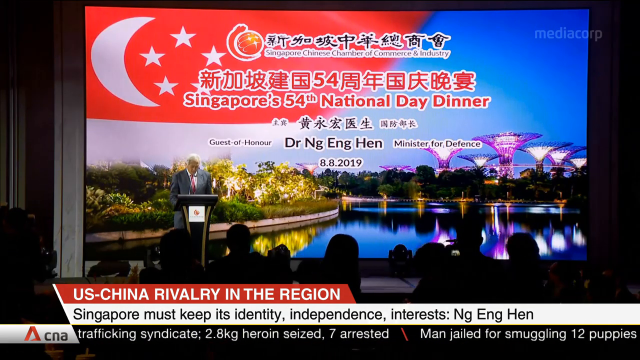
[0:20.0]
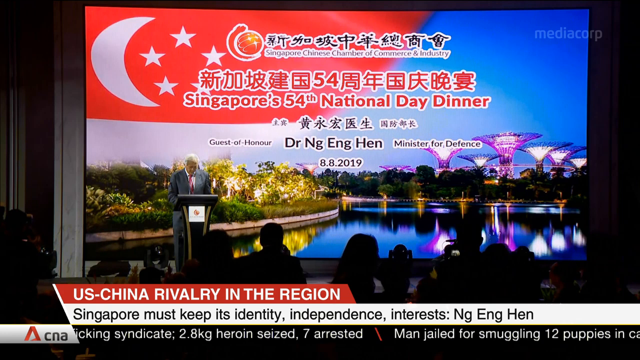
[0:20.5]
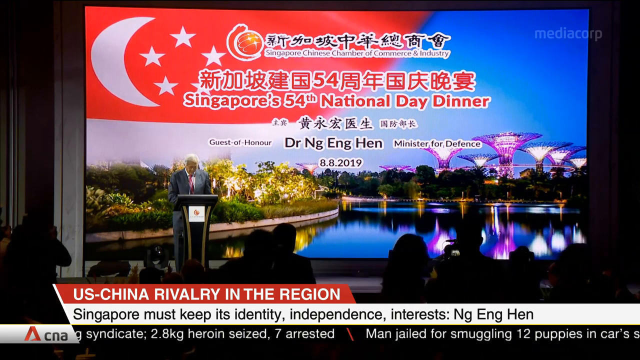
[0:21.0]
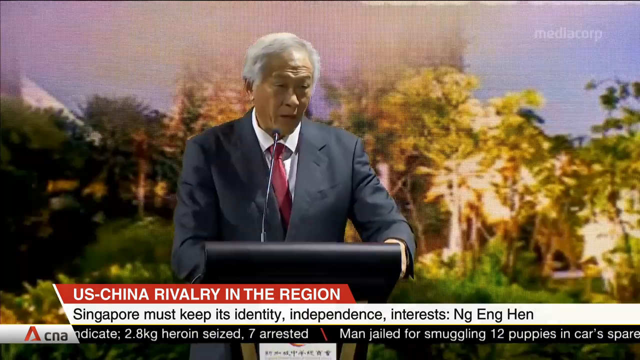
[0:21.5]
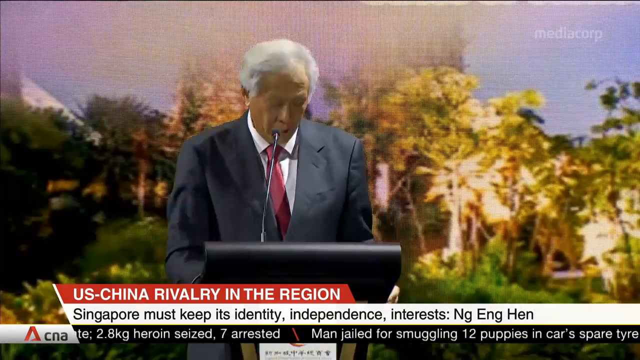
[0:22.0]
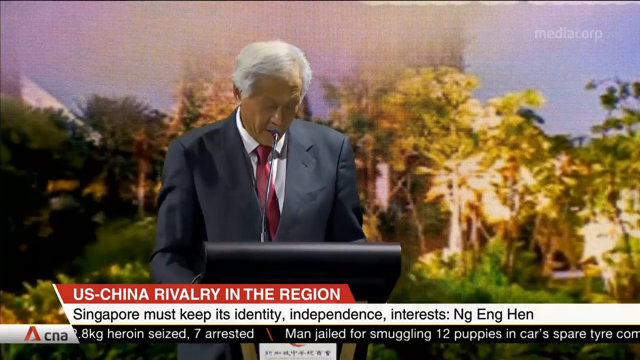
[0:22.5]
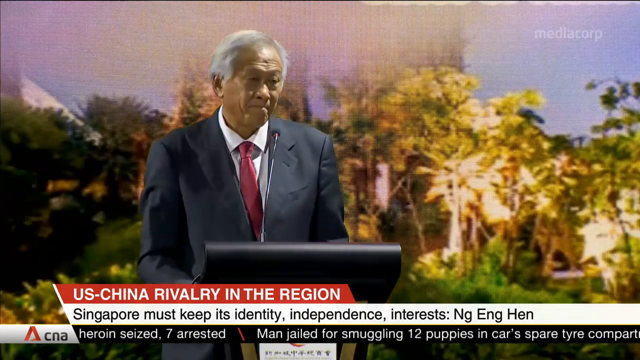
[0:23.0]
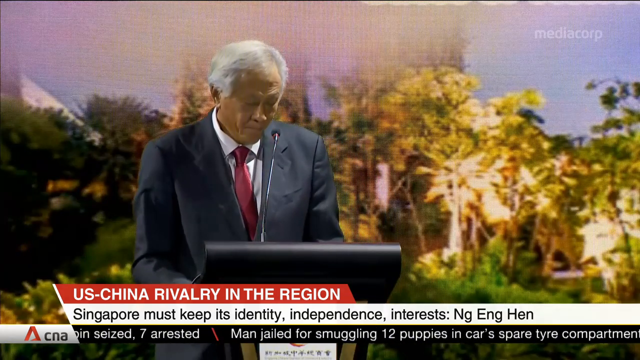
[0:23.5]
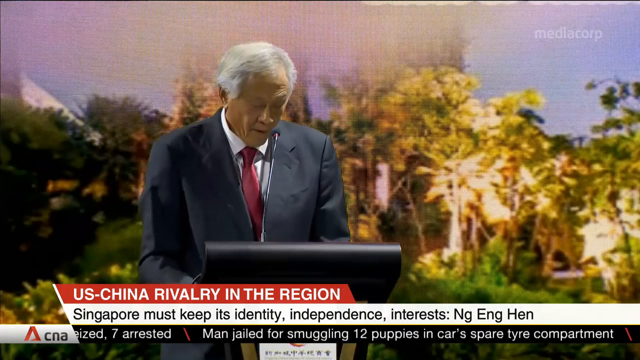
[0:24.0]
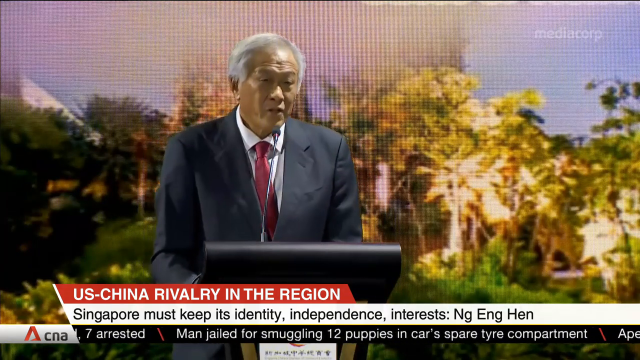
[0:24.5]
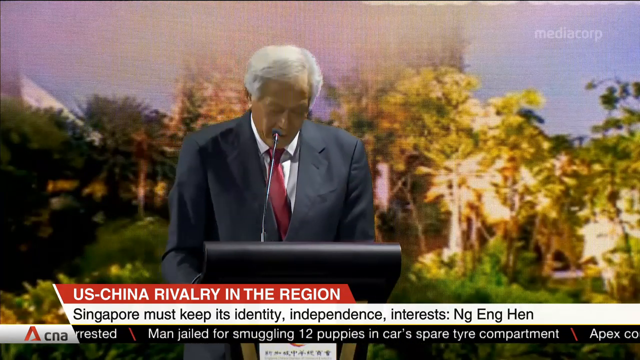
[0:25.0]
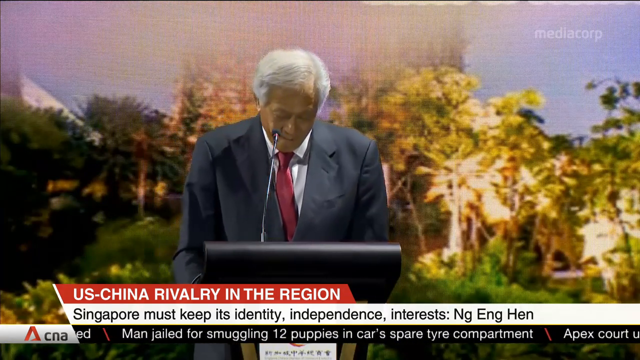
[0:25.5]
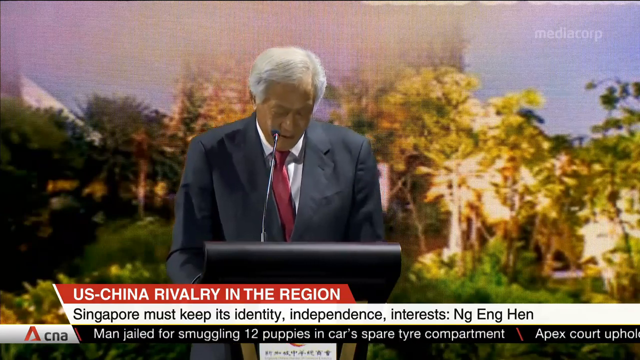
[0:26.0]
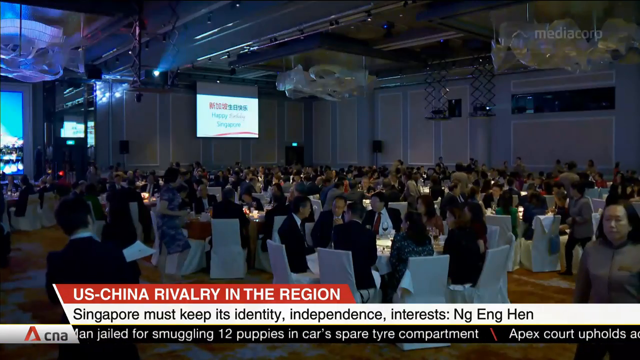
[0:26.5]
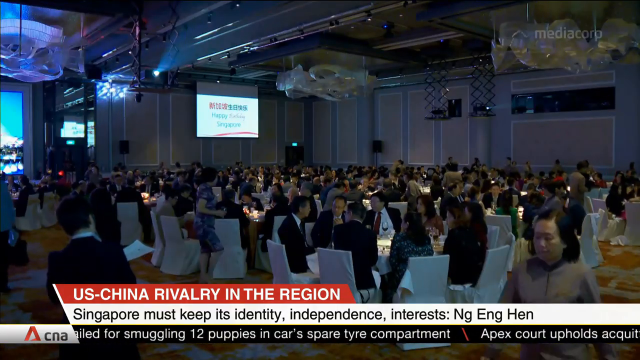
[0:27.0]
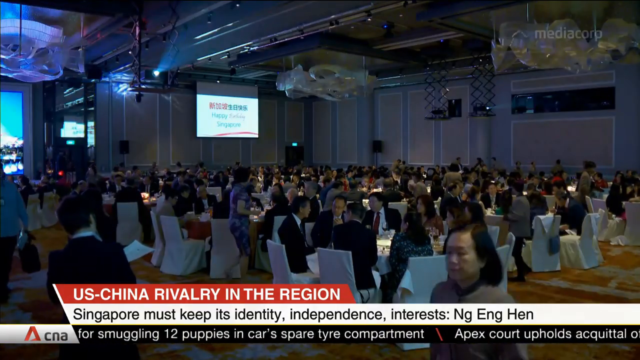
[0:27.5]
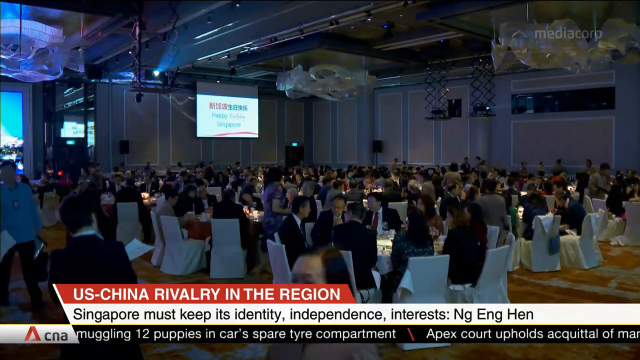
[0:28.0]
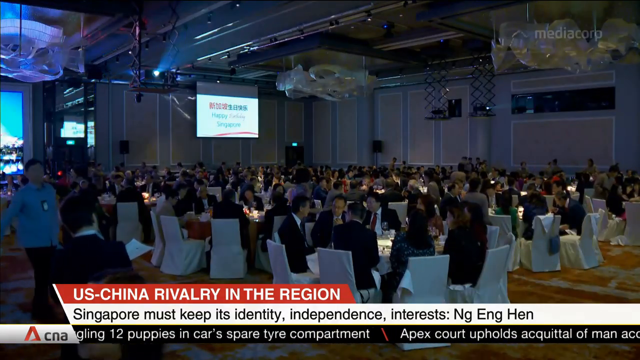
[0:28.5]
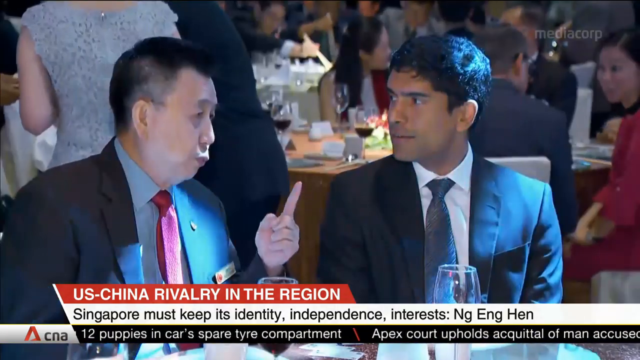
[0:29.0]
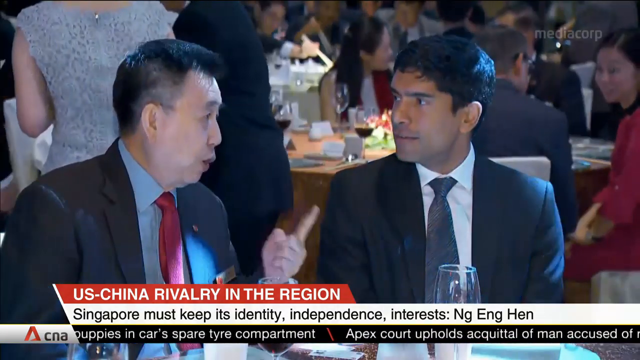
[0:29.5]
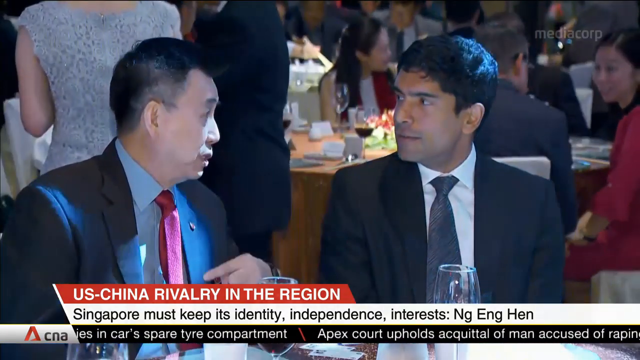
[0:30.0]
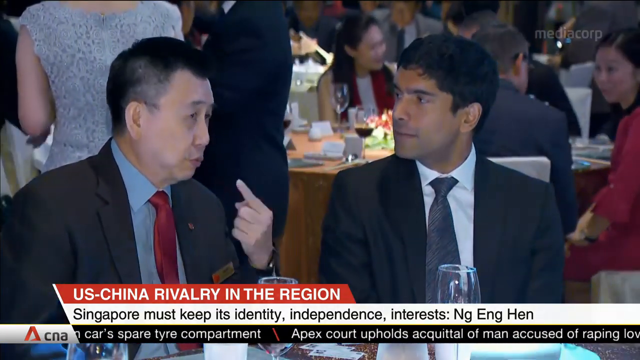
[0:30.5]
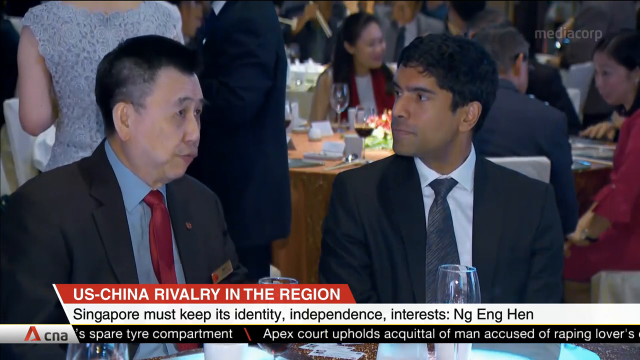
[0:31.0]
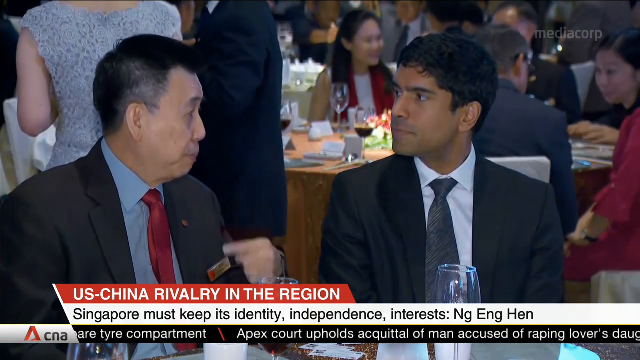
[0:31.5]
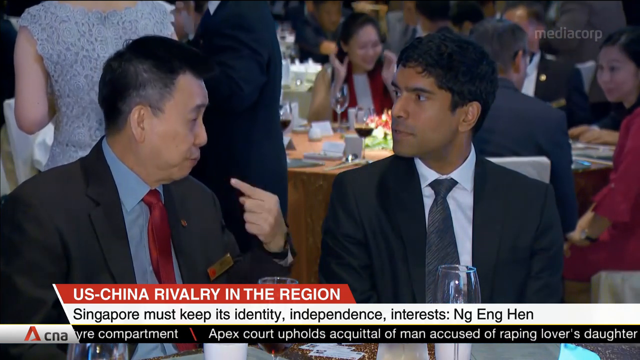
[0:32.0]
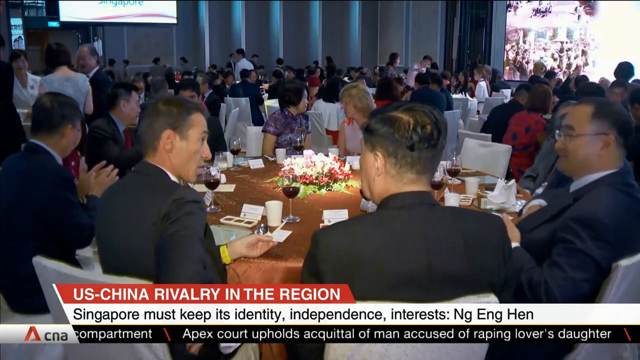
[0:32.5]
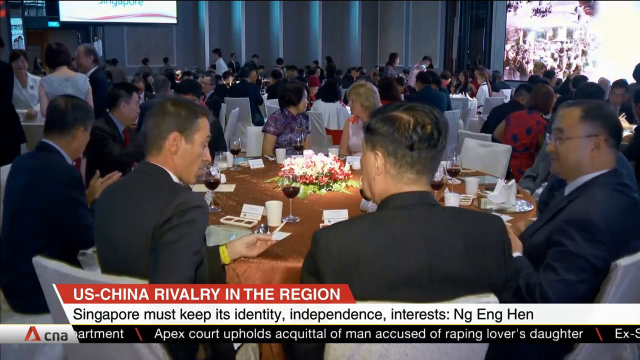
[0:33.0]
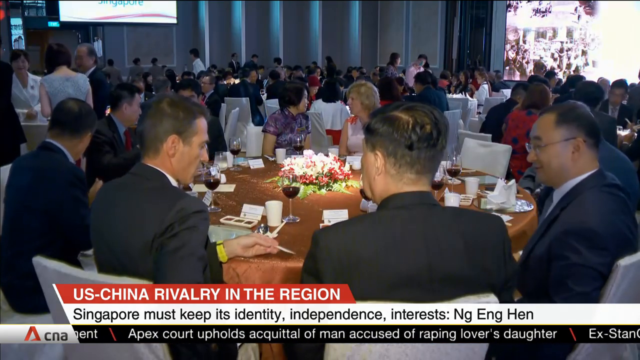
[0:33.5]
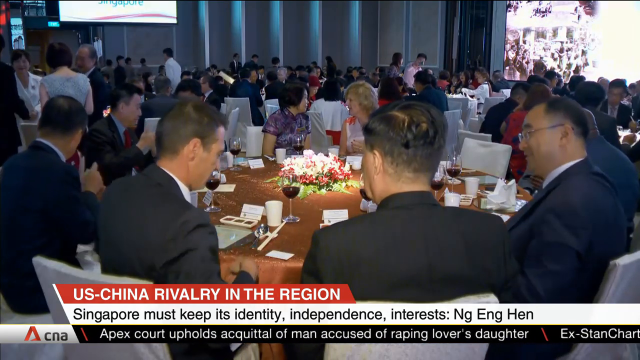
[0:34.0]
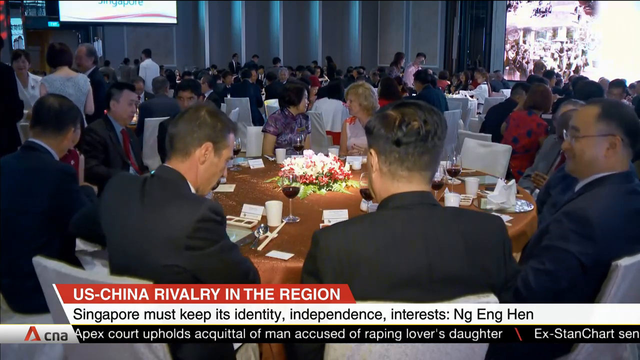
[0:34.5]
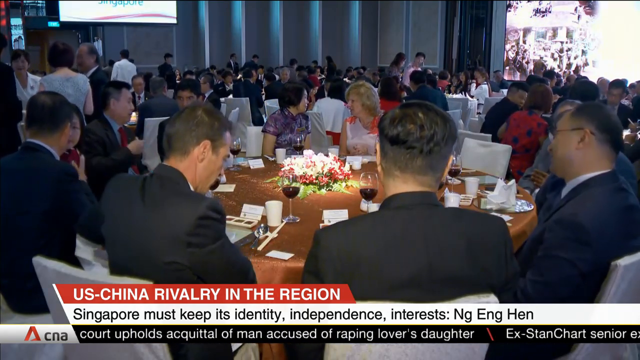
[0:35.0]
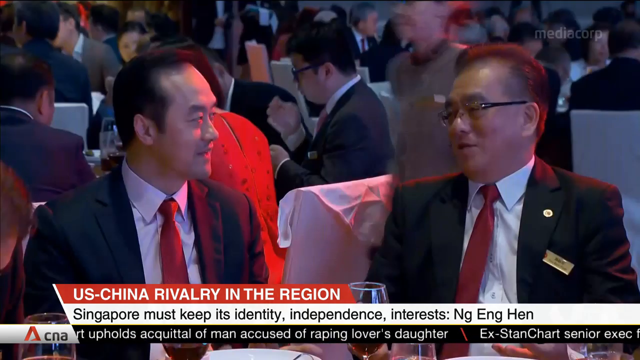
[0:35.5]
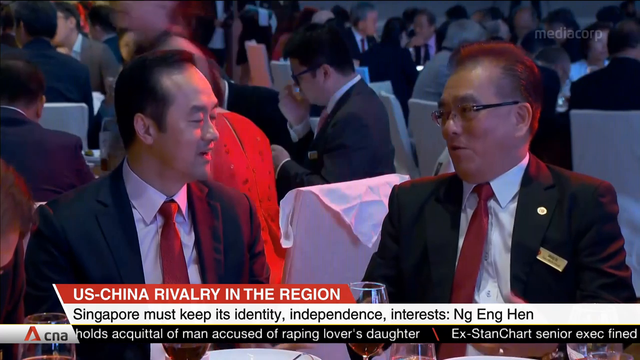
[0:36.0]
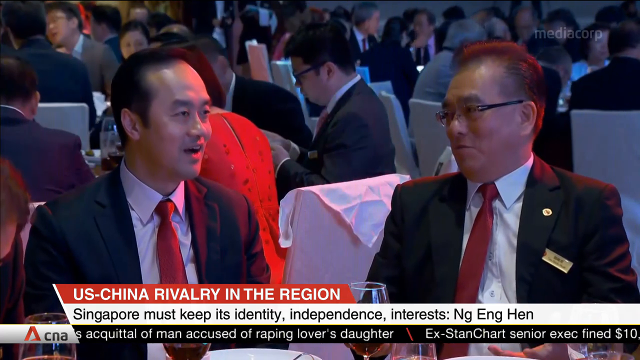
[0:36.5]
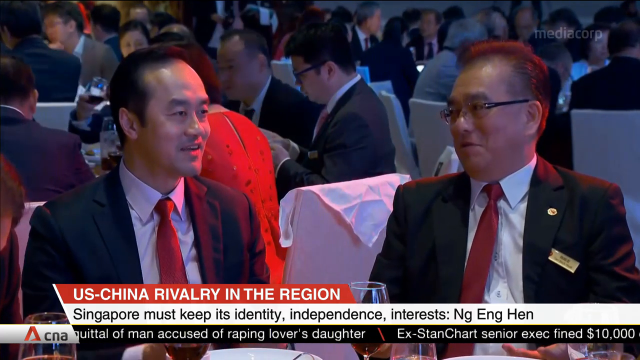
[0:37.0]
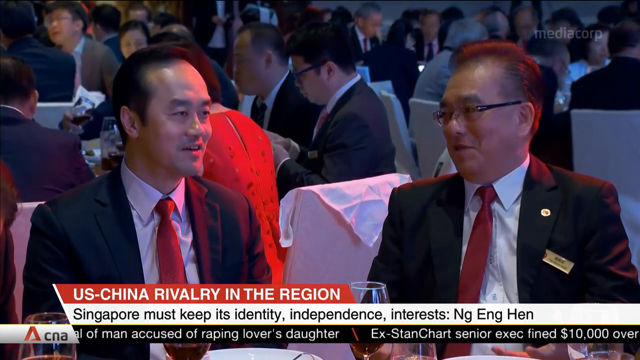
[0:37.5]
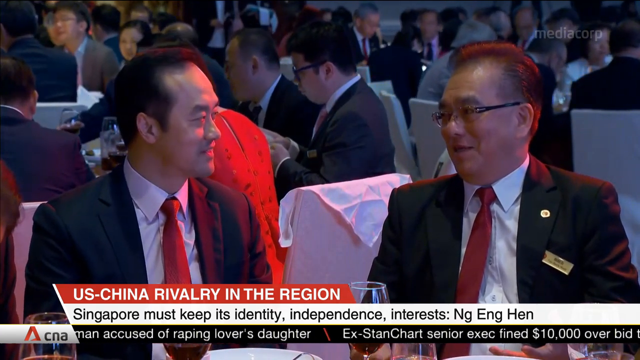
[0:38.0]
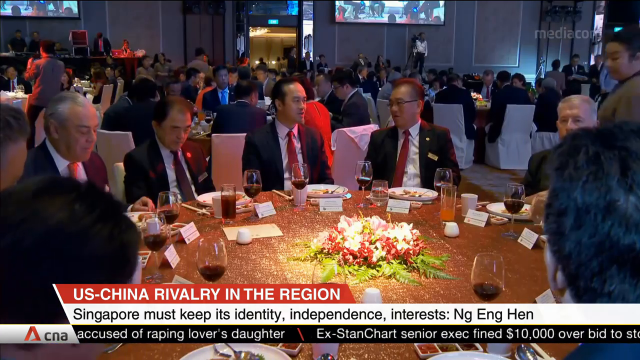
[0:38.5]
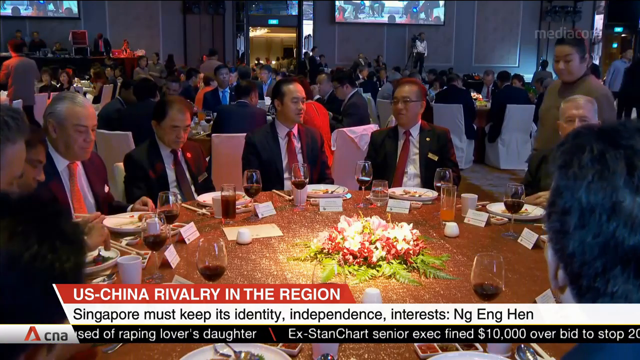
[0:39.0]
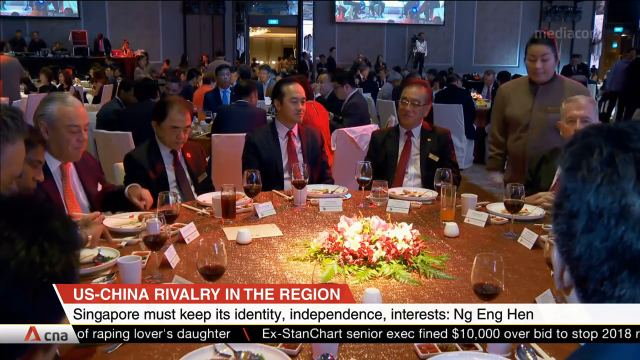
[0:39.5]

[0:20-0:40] The shot of the man standing at the podium in front of the large screen quickly cuts to a close-up of him, with some trees from the image of Singapore visible on the screen behind him. He is probably aged around 70, with white hair, and wears a black suit, a white shirt and a red tie. He stands at the podium with a small microphone, looking quite serious as he speaks and referring down to the script on the podium. The video cuts to a room of people sitting around round tables, presumably at mealtime during the conference. Probably around 20 tables are visible, all with white linen tablecloths and chairs with white covers. Every table is full, and the people are speaking to each other. Some people walk around the edges, and a screen is high up on the wall at one end of the room. The walls are panelled and the ceiling has quite large lights that are not turned on, making detail quite hard to see. A close-up shows two men seated at the tables talking to each other seriously, both in business suits and ties: the man on the left wears a red tie with a pale blue shirt, and the man on the right wears a black tie with a white shirt. The man on the left gestures with his hand as he speaks. Another shot shows part of the room with a table covered in a gold tablecloth, while all the others have white tablecloths. A group of people sits around it talking, most with a glass of red wine in front of them, and there is a flower arrangement in the middle of the table; in the distance many other people sit at their tables talking. A close-up then shows two different men talking, both in suits with white shirts and red ties. The man on the right has glasses, a name badge and a pin, too small to read in the low-resolution footage. They smile as they talk, and other people talk at their own tables in the background. The video cuts back to the table with the gold tablecloth, where many men sit talking, and a waitress walks over to the table.